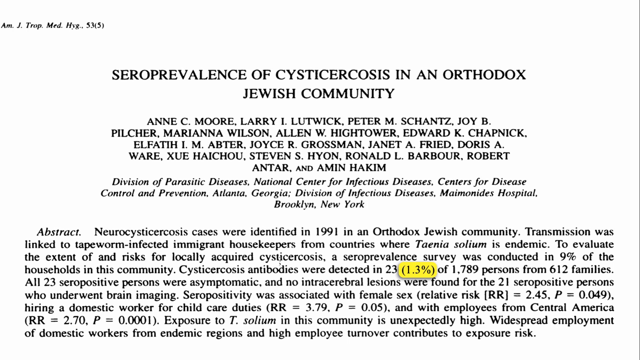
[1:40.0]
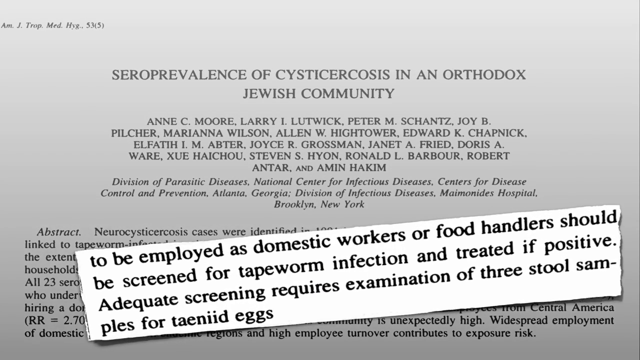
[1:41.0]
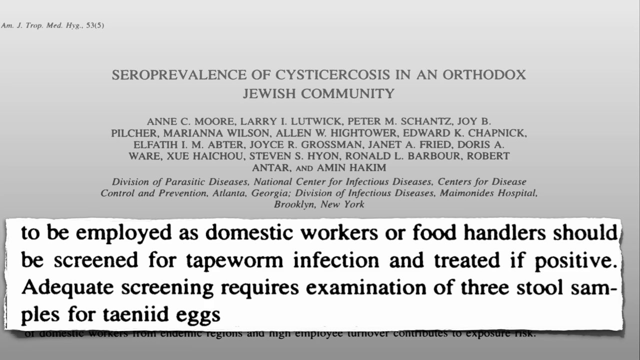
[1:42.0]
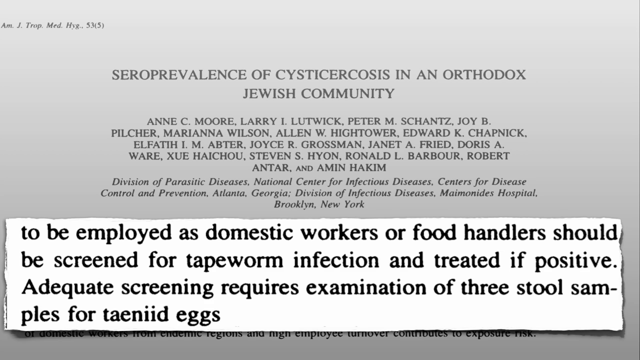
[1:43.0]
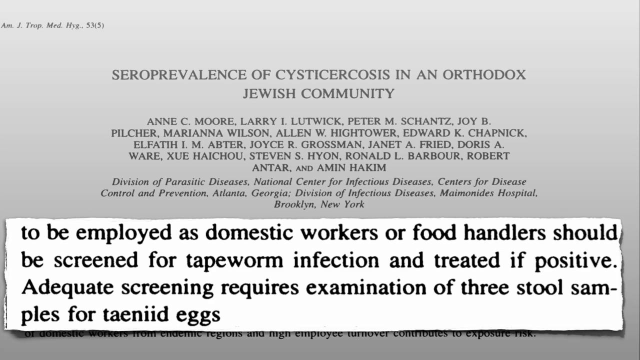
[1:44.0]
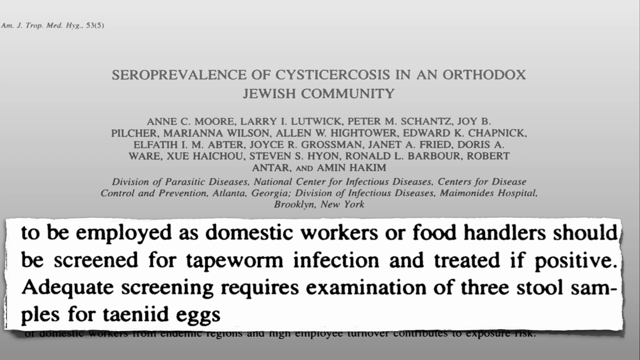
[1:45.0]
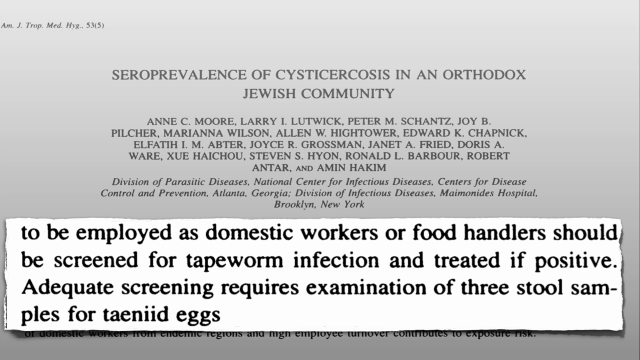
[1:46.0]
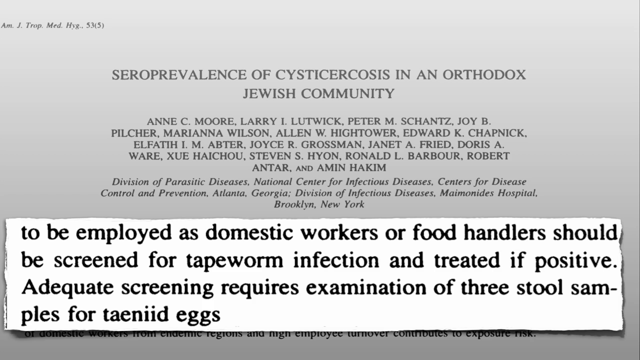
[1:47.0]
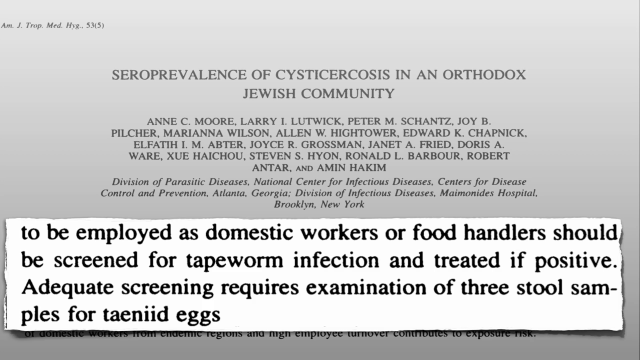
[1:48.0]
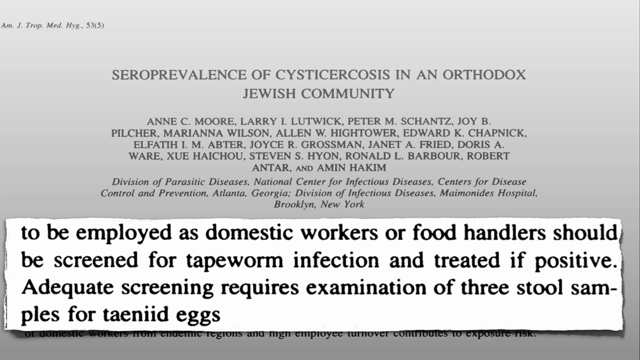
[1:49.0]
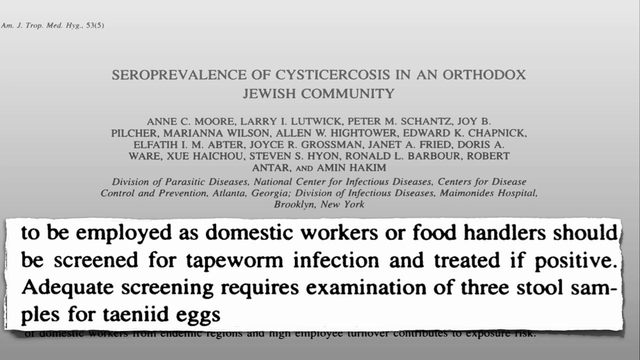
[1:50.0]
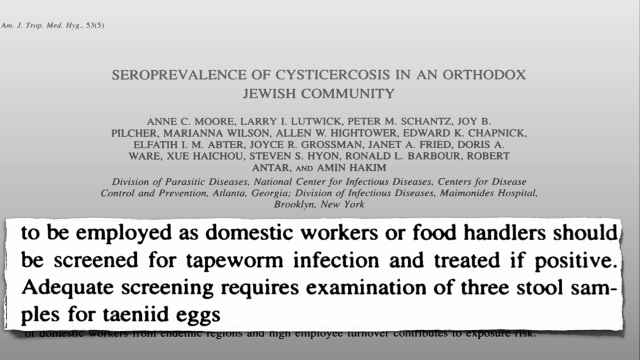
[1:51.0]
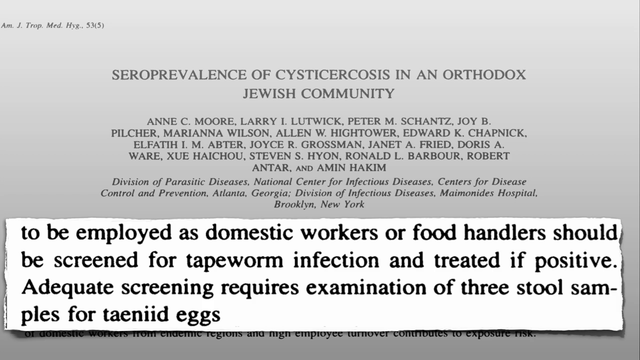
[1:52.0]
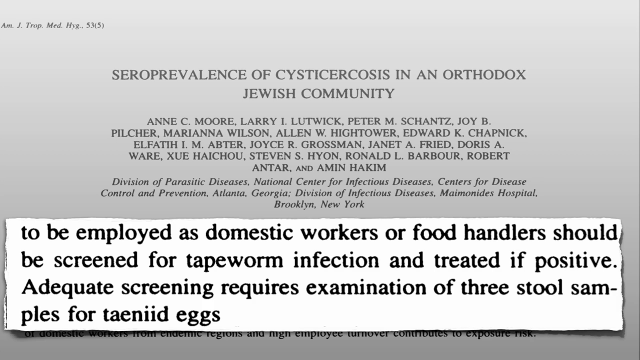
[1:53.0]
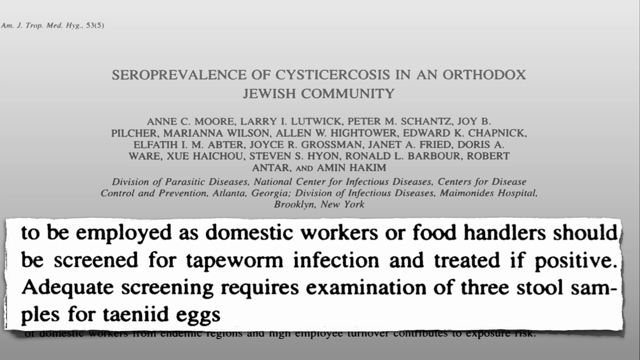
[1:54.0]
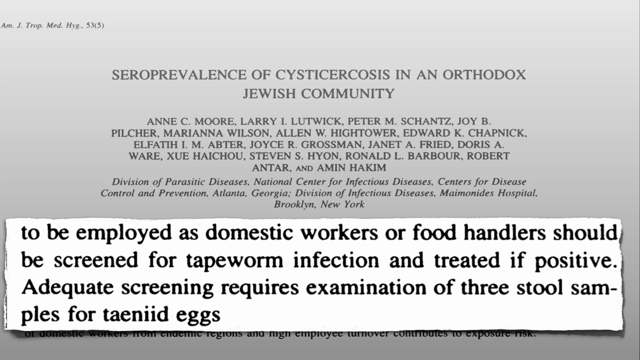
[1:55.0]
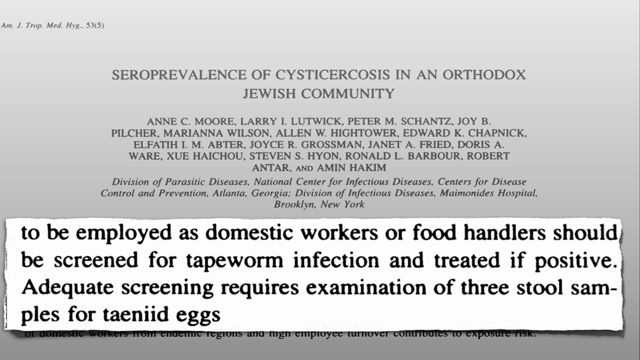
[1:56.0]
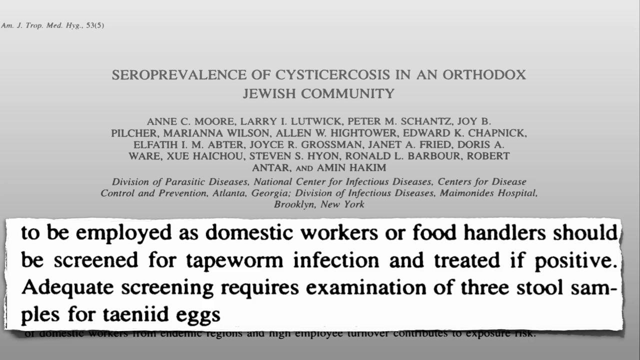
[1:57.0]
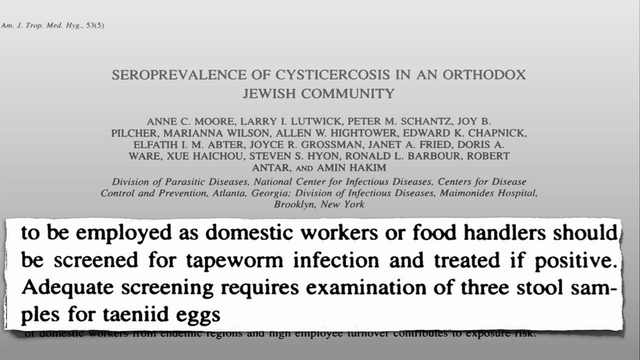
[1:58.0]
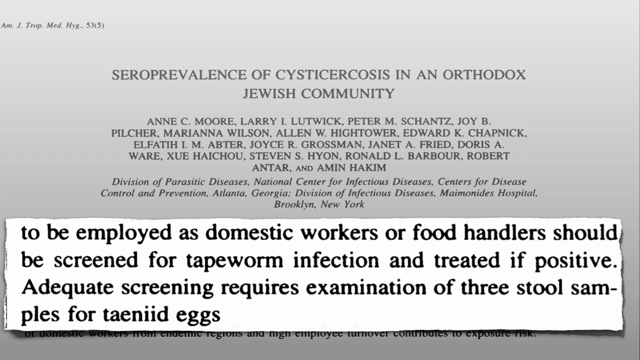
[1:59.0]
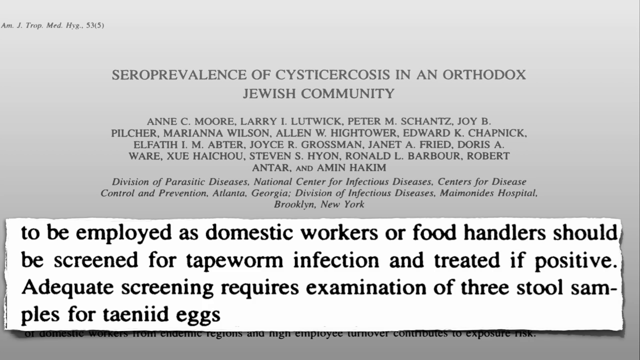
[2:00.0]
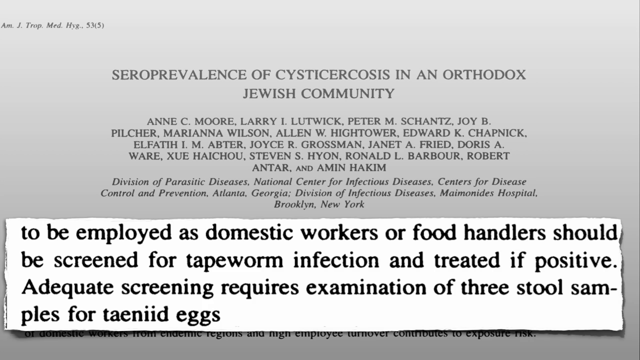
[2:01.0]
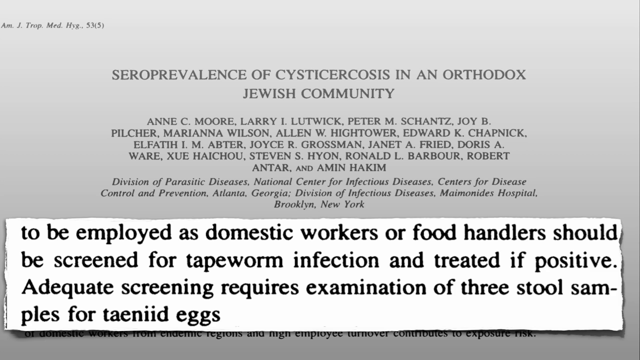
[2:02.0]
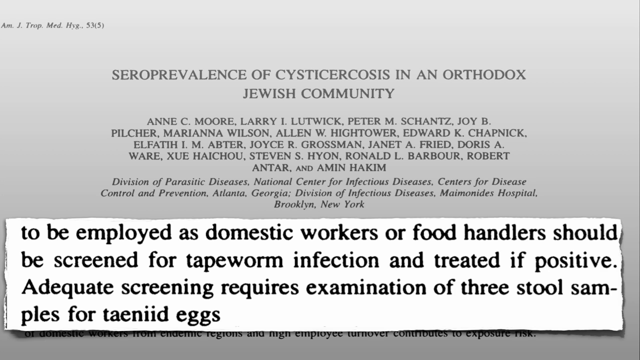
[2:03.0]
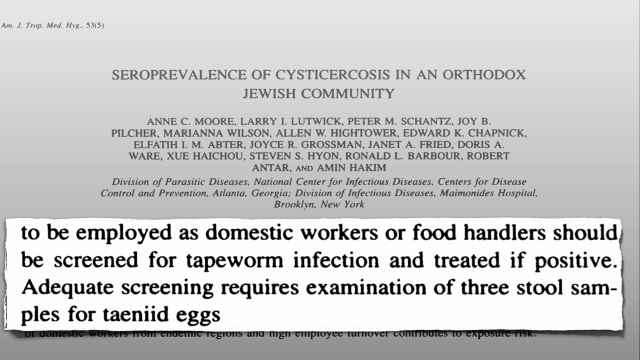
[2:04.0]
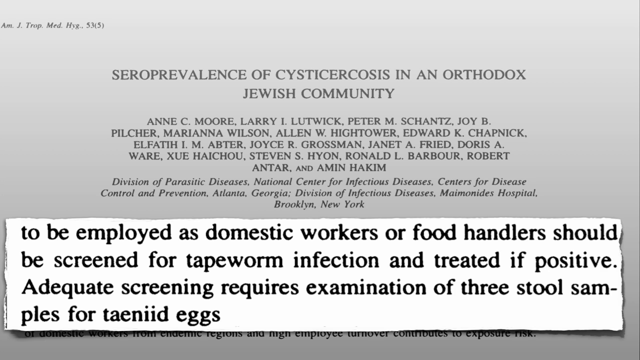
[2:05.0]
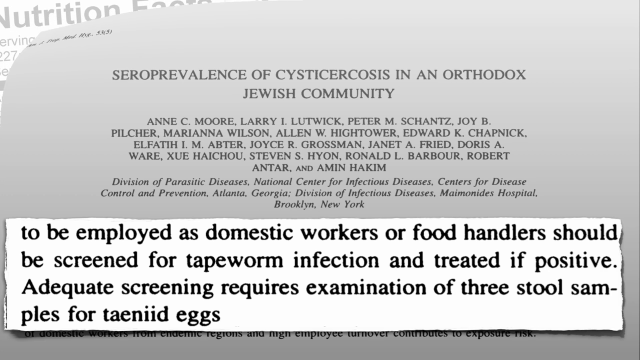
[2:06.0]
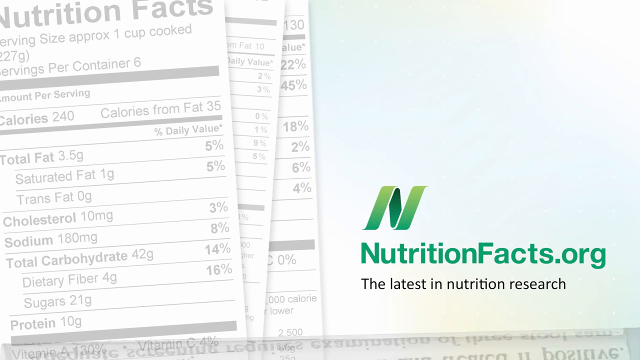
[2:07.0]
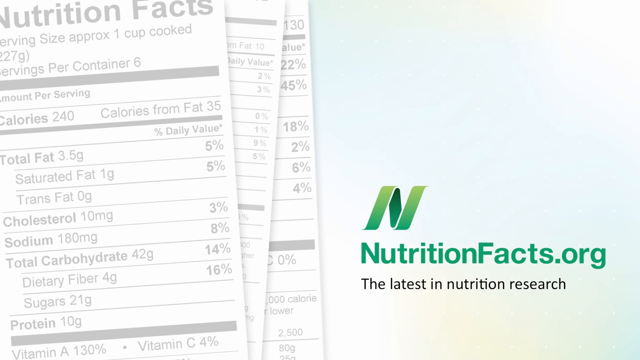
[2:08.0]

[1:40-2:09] Another journal article, apparently the American Journal of Tropical Medicine and Hygiene, volume 53, number five, also concerns an Orthodox Jewish community. A quote addresses domestic workers or food handlers and the need to screen them for tapeworm and treat them if infected; adequate screening requires examination of three stool samples for tapeworm eggs. The article has a large number of authors, who worked at the National Centre for Infectious Disease, the Centre for Disease Control and Prevention in Atlanta, Georgia, and the Division of Infectious Diseases at Maimonides Hospital in Brooklyn, New York.